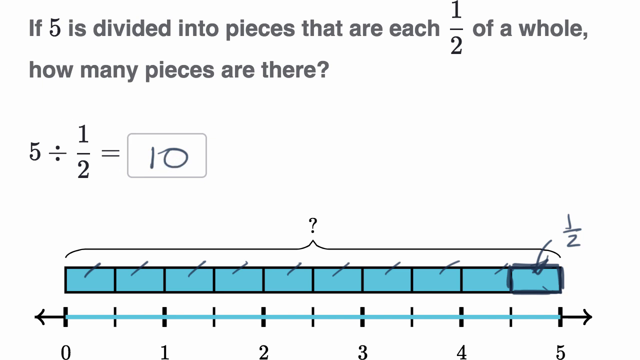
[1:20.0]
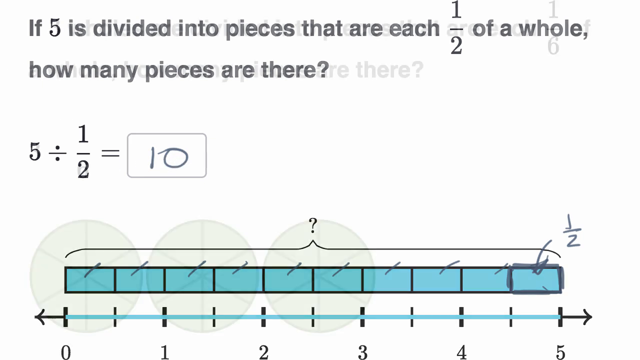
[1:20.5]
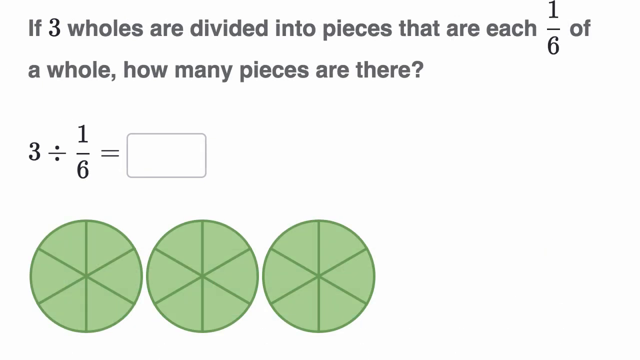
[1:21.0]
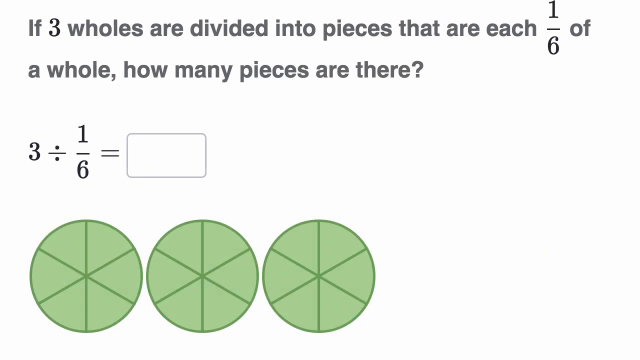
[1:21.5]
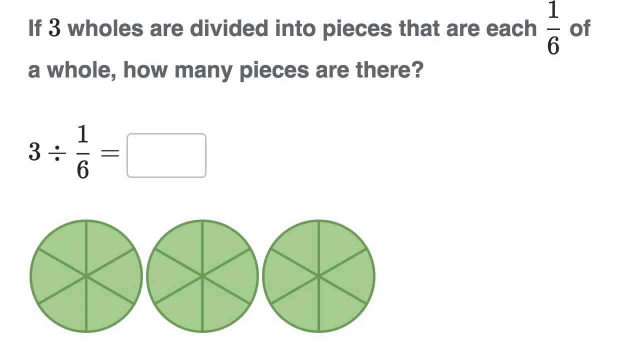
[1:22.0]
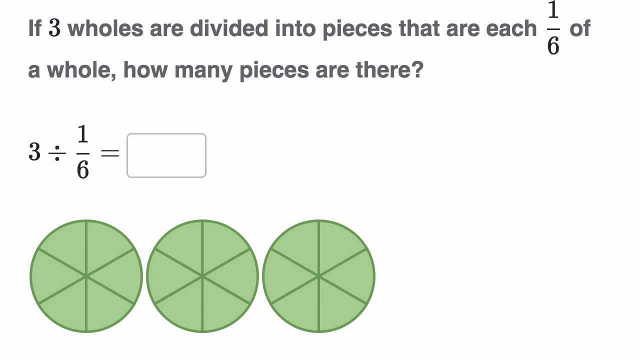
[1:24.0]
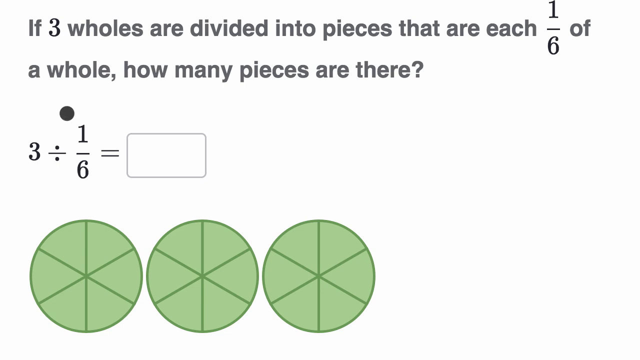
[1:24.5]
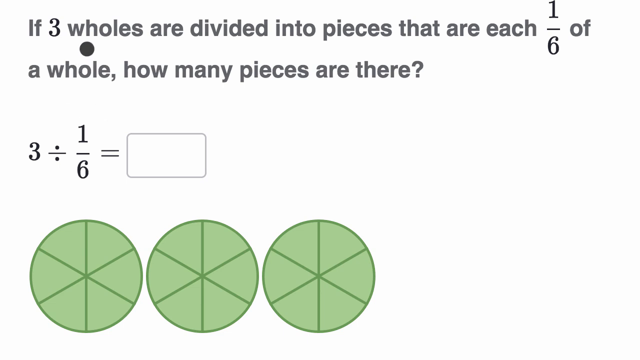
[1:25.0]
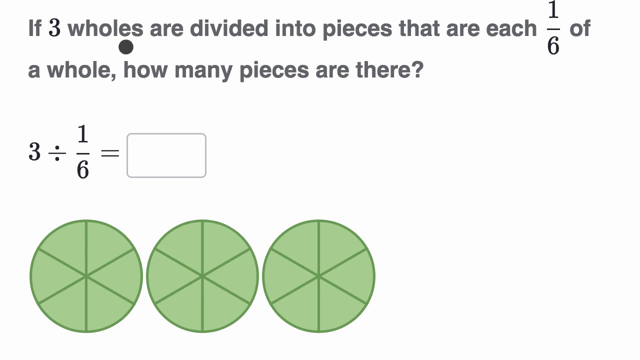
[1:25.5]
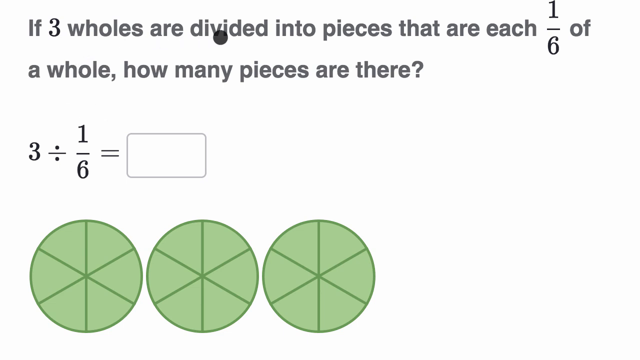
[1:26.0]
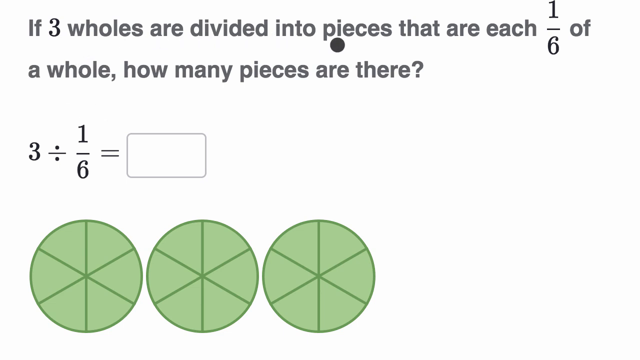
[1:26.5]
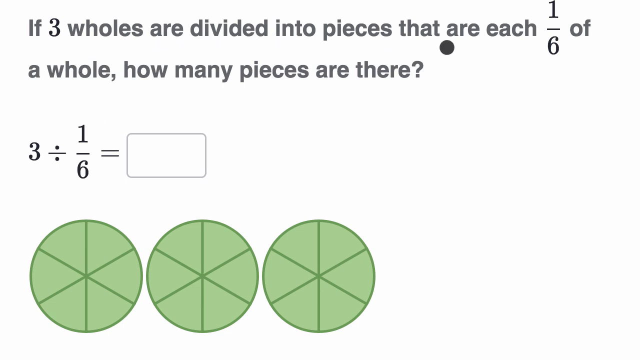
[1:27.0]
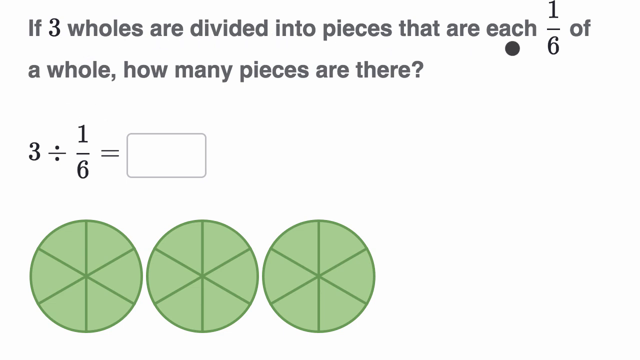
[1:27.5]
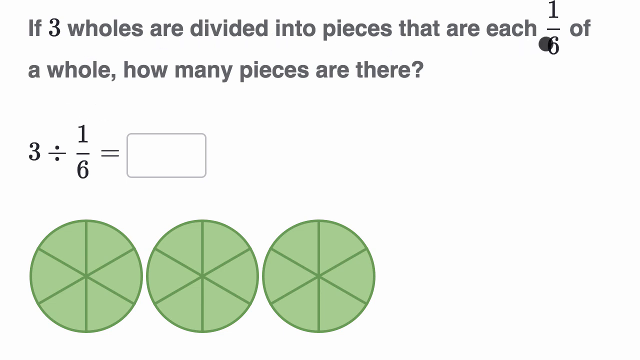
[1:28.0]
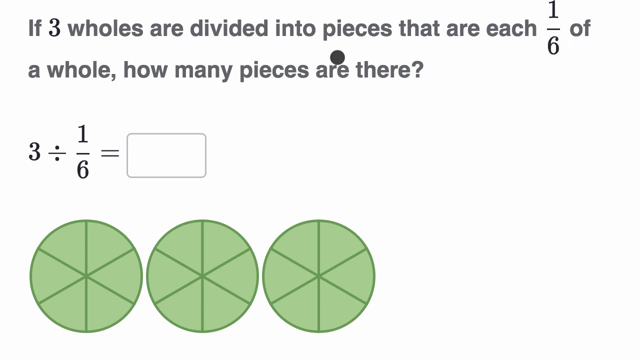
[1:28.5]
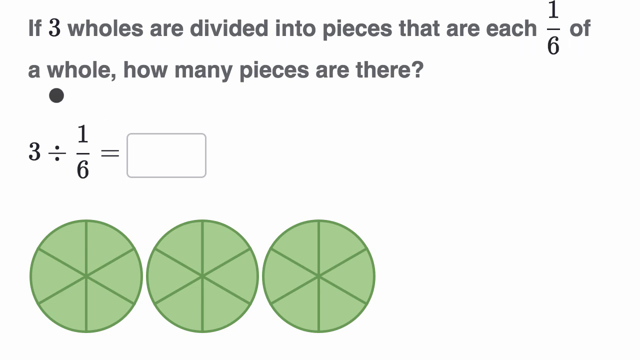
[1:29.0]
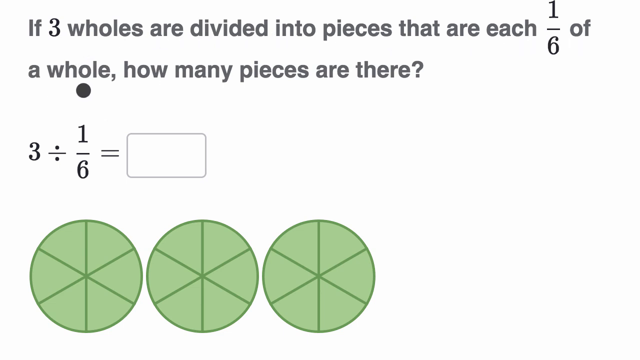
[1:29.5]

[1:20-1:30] On a white background, grey text in two lines is at the top. In the middle on the left is the equation "5 ÷ by 1/2 =" and an entry box with the number 10 drawn in it. At the bottom is a blue bar divided into 10 sections, with diagonal lines drawn into the top of each section, an arrow pointing down to the rightmost section, and 1/2 drawn above and to the right of the arrow. Beneath it is a blue graph with a zero at its leftmost mark and a five at its rightmost mark. The video fades out and changes: the grey text at the top now reads "If 3 wholes are divided into pieces that are each 1/6 of a whole, how many pieces are there?" Beneath it on the left is the text "3 ÷ by 1/6 =" with an empty text entry box to its right, and below that are three green circles, each divided into 6 pieces. The circular cursor moves right from the left side to hover under the word "wholes", traces the text to the right side, then moves down and to the left to trace the rest of the gray text to the right.